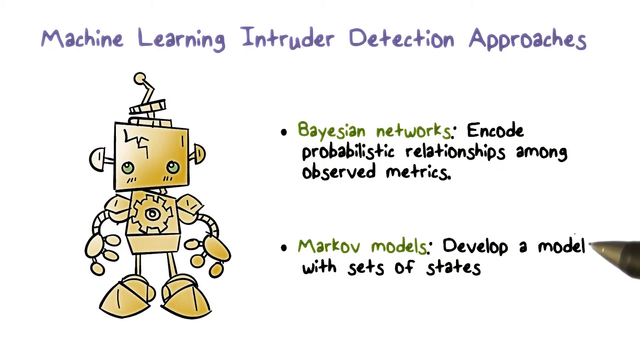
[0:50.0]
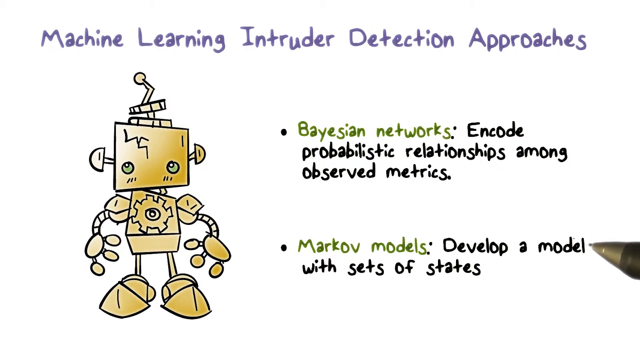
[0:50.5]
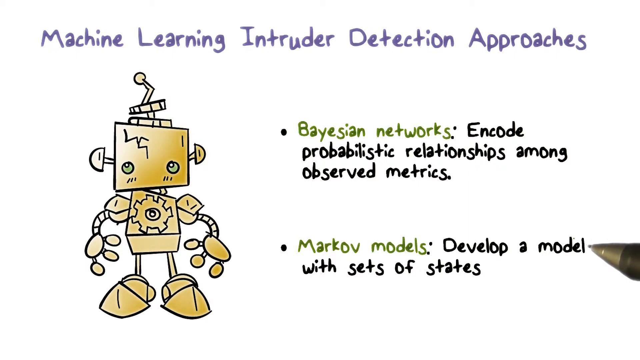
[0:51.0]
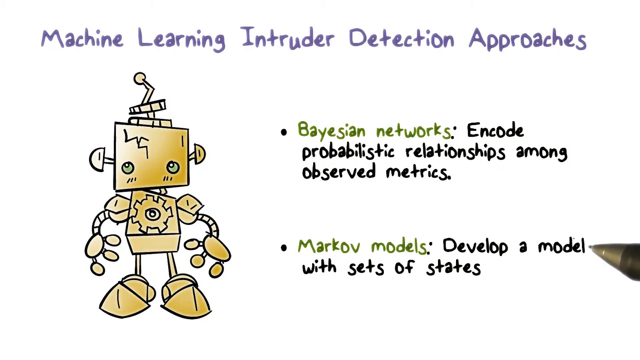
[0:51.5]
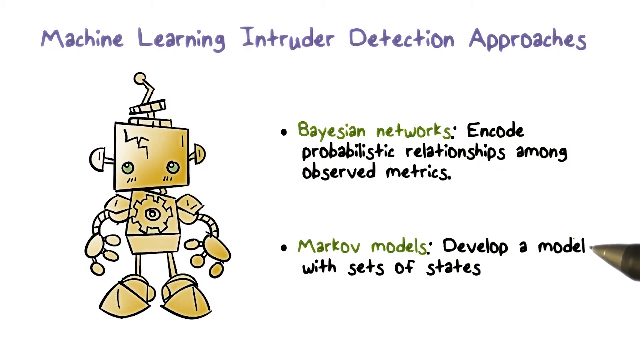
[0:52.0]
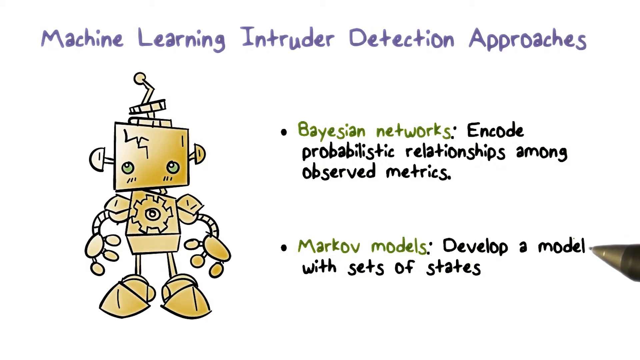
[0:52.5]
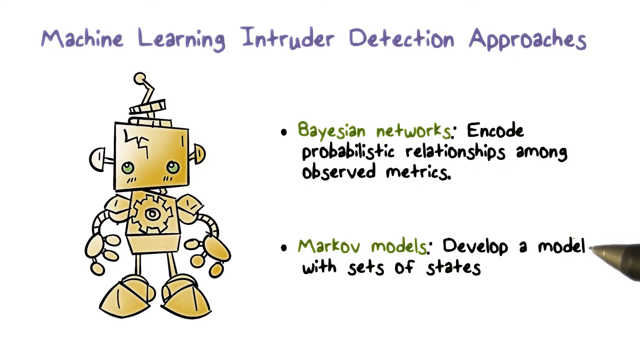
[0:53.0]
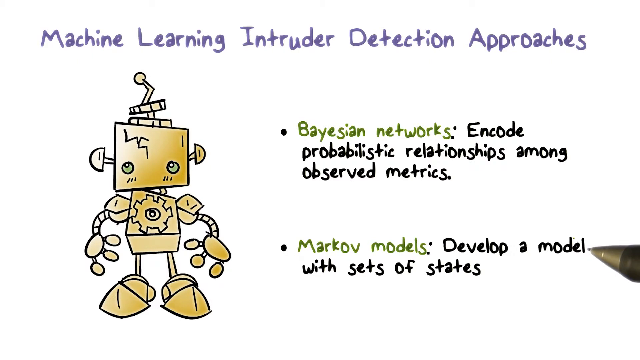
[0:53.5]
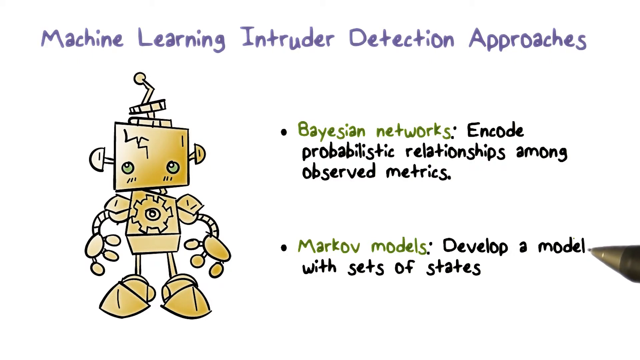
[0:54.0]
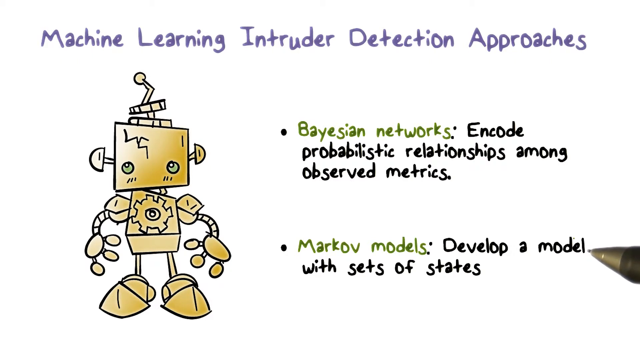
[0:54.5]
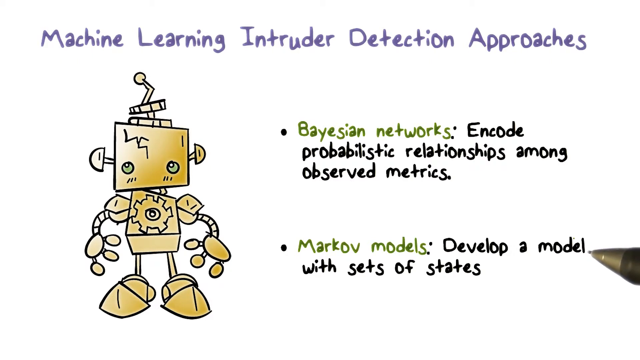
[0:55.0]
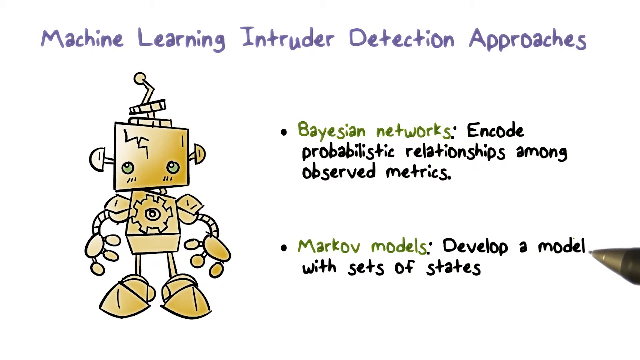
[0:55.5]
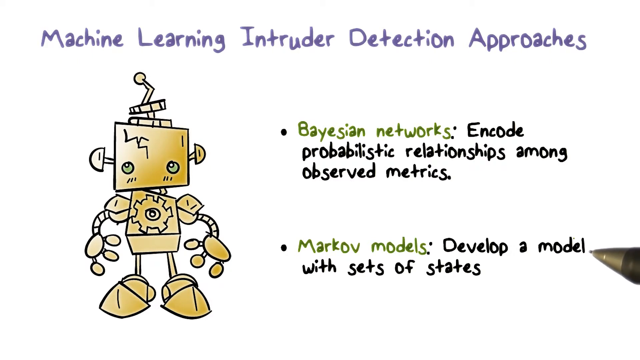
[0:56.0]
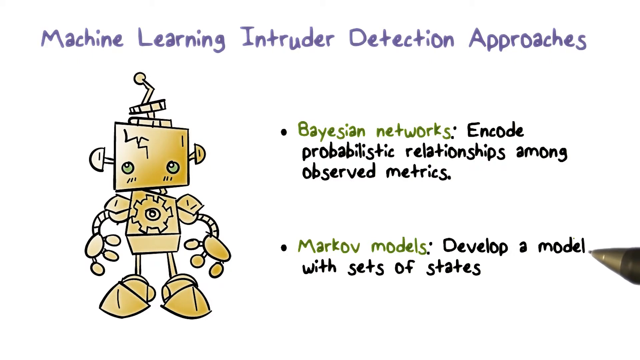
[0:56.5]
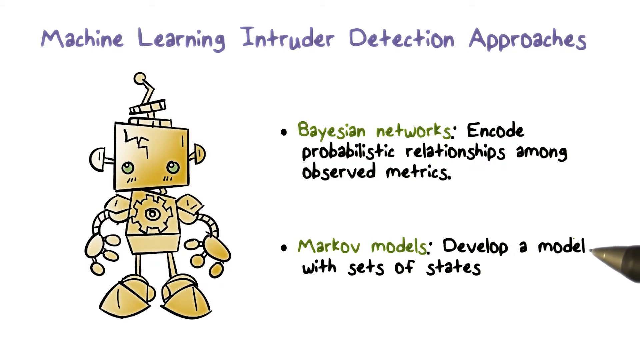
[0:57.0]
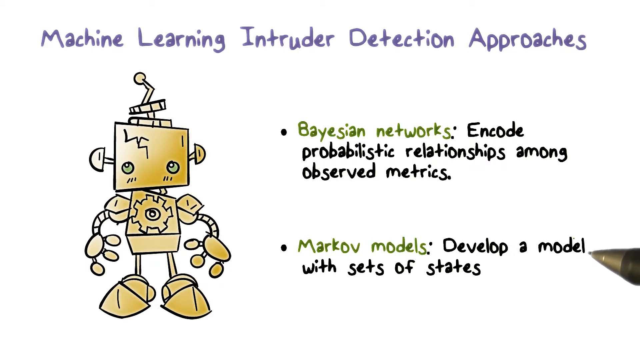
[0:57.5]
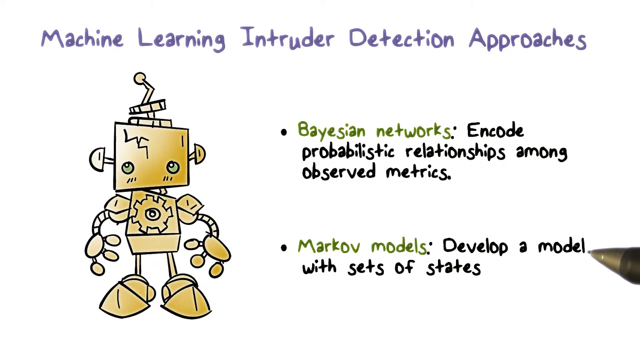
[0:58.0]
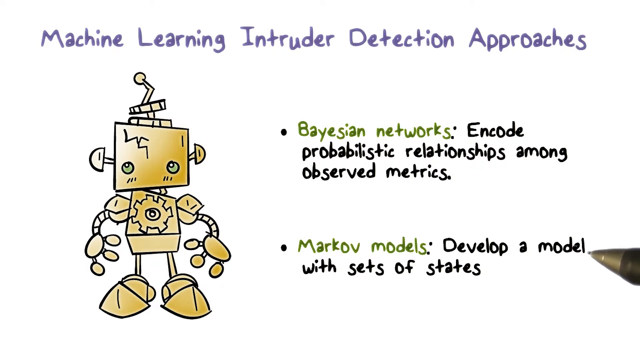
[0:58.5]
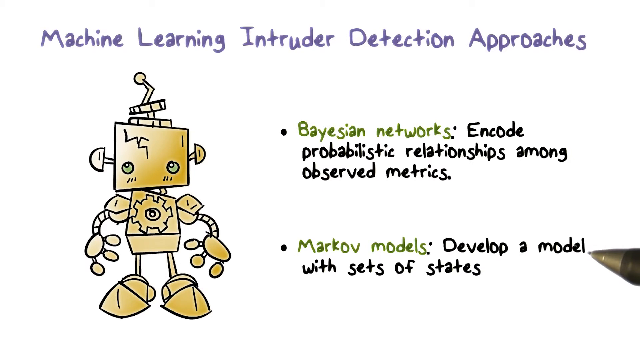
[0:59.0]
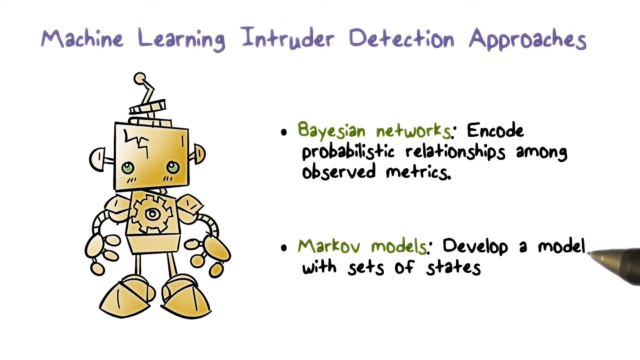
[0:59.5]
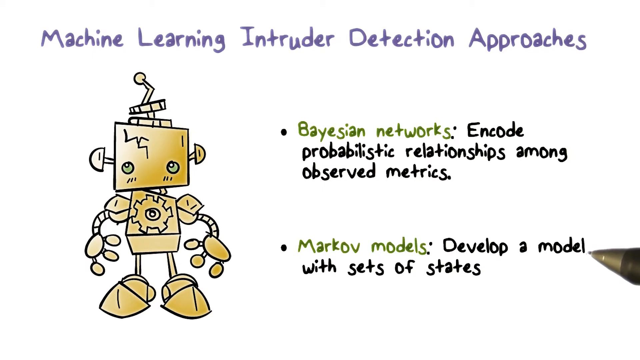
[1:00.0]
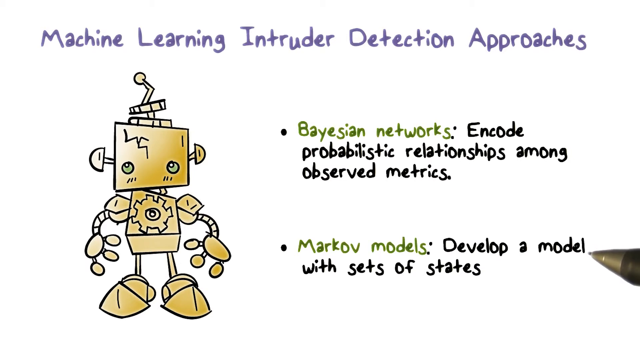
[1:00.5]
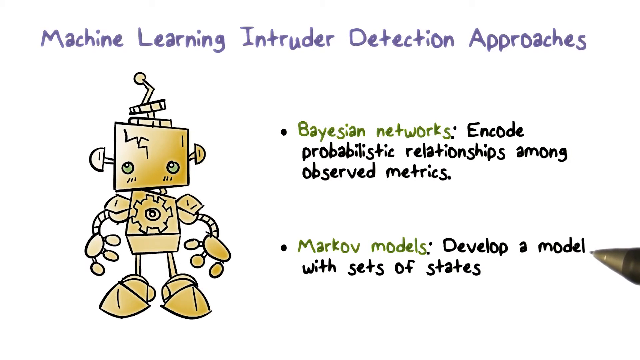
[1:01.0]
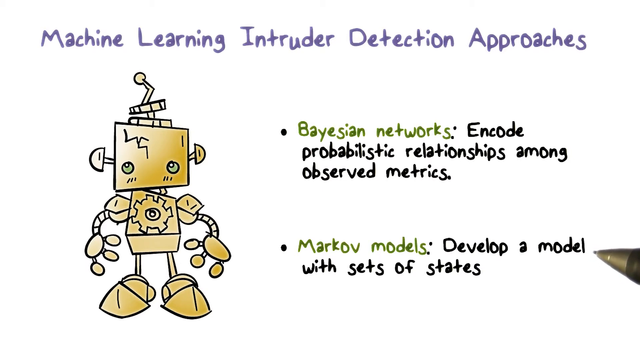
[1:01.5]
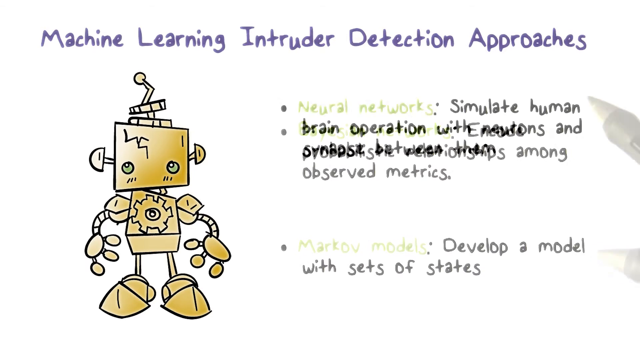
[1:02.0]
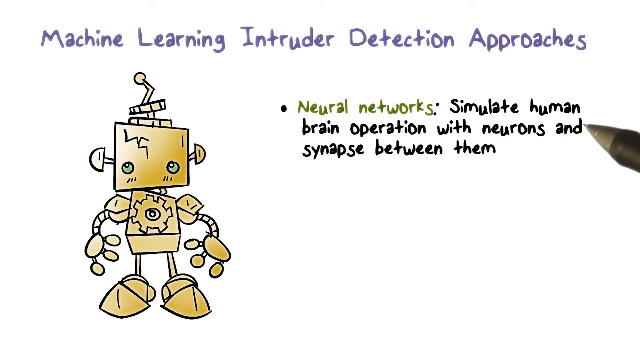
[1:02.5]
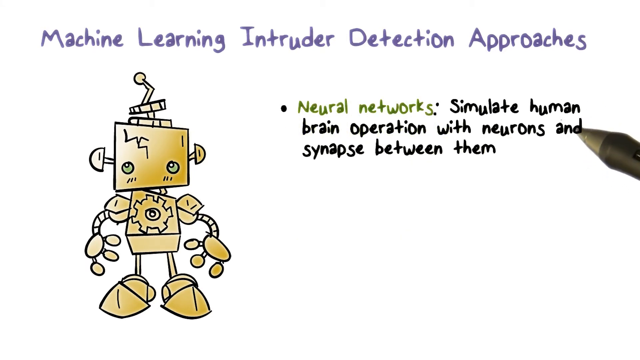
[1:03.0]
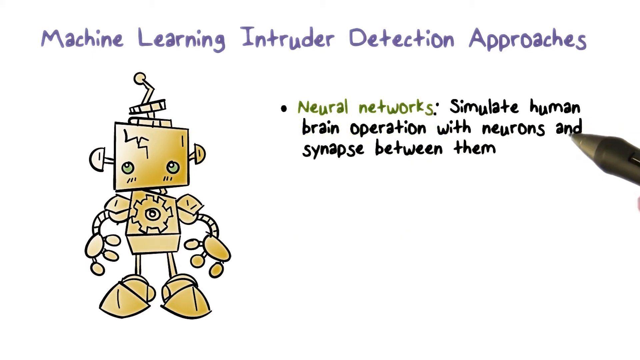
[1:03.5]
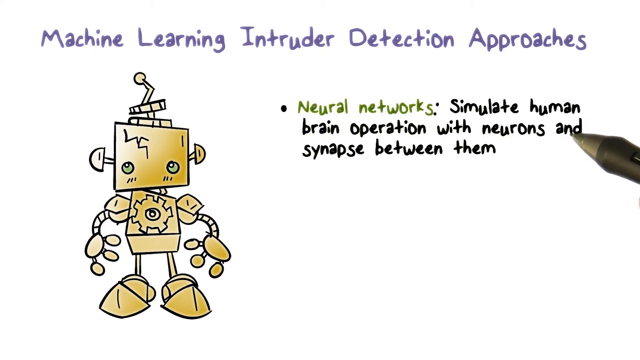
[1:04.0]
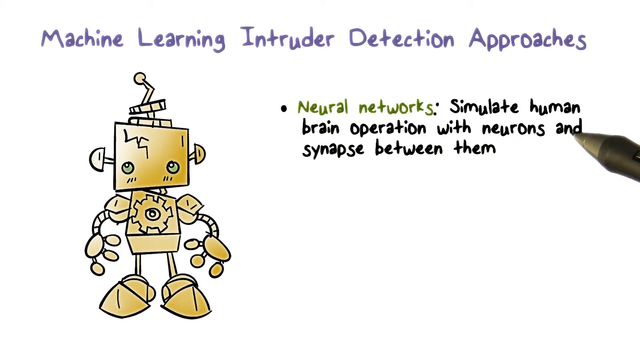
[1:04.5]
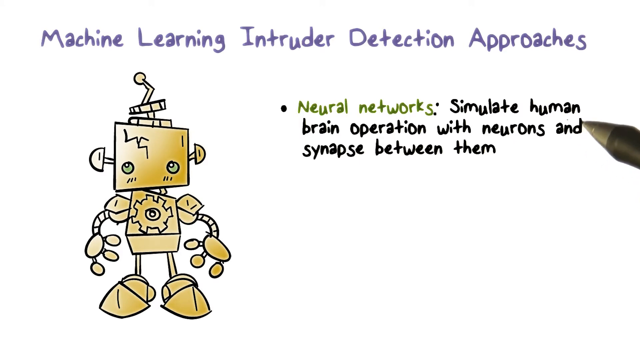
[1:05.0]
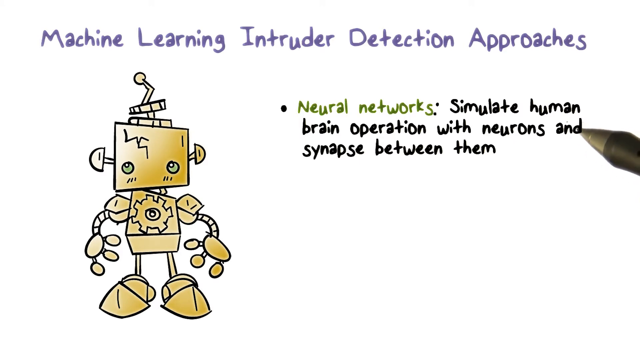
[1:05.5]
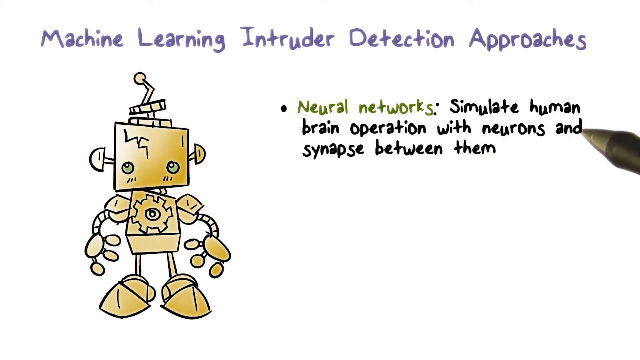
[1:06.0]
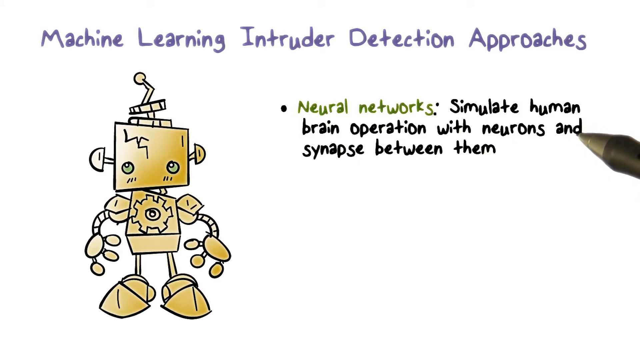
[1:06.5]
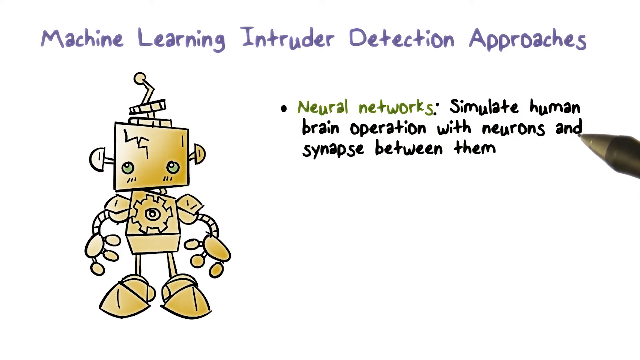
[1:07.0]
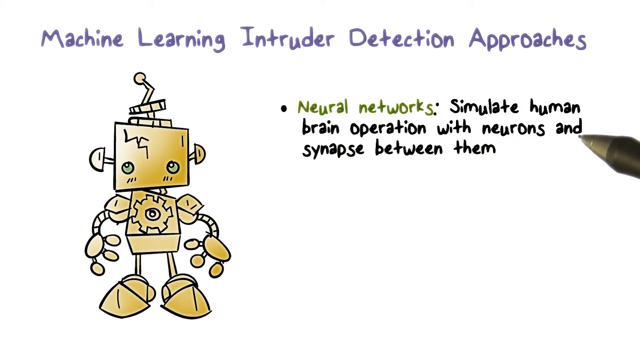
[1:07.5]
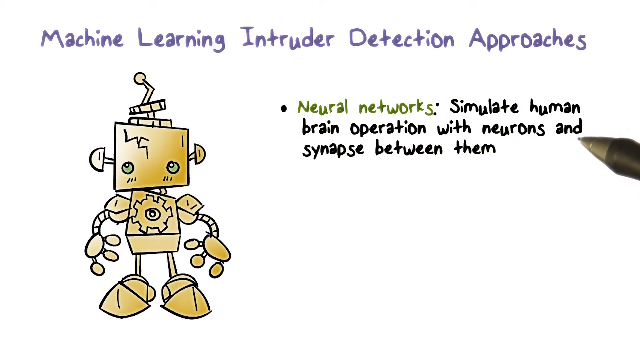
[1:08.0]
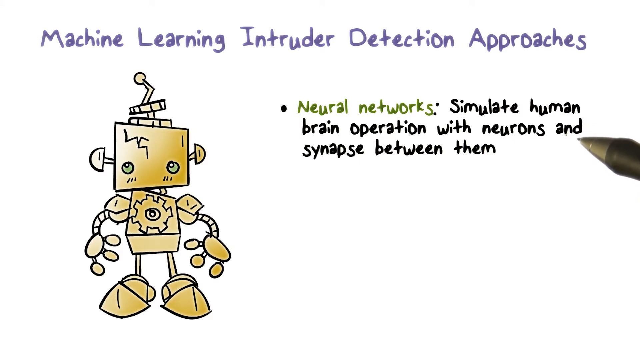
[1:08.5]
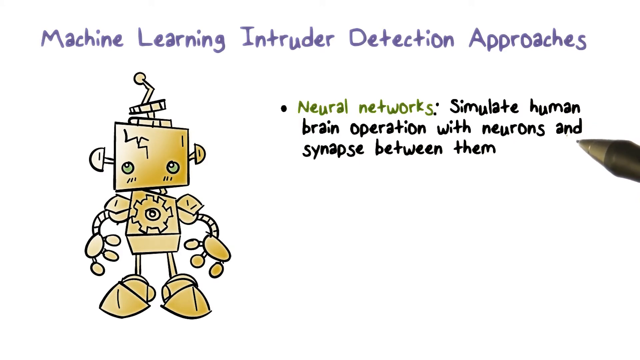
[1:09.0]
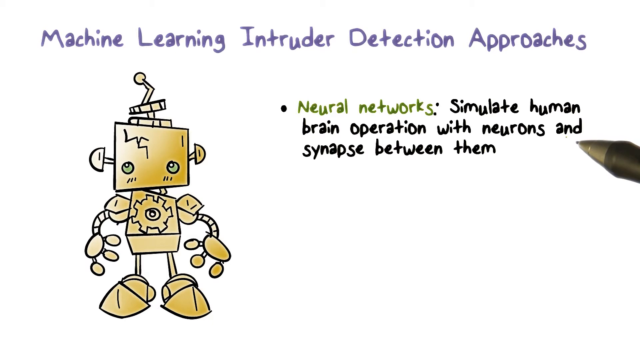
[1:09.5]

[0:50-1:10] The character on the left has a gold head and a gold body with the gear shift on his stomach; the gear shift has seven parts sticking out. The two earlier bullet points have disappeared, and the pen comes up for another bullet point: "neural network" in green, a semicolon, and then in black, "simulate human brain operation with neurons and synapses between them." The pen moves slightly. Below is a second bullet with a heading in green, followed in black by "develop a model with set of states." The pen has a very tiny point on the very end and moves slightly back and forth as it points to the word "model." At the bottom is a black area that fades to gray. The hand picks the pen up and moves it toward the word "model," and then the pen becomes stationary, looking as if it is lying down on the white surface.